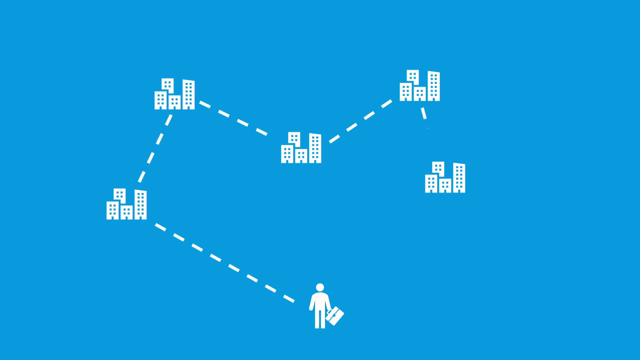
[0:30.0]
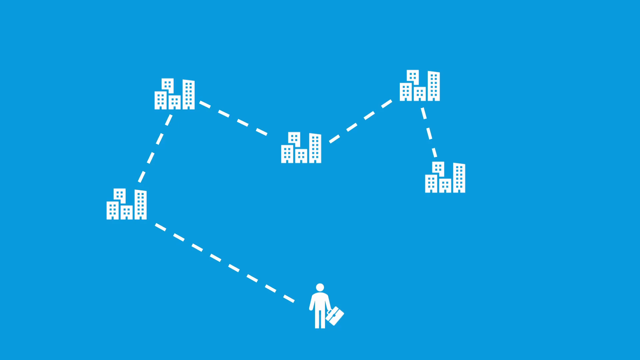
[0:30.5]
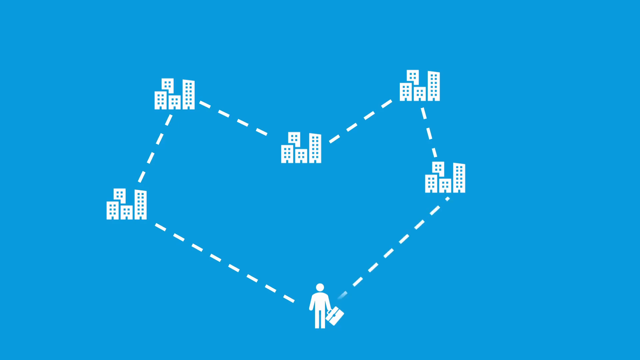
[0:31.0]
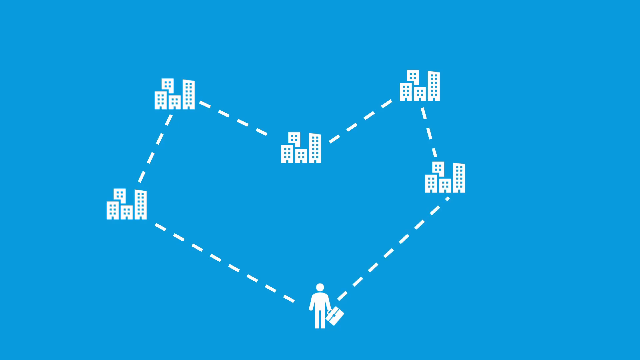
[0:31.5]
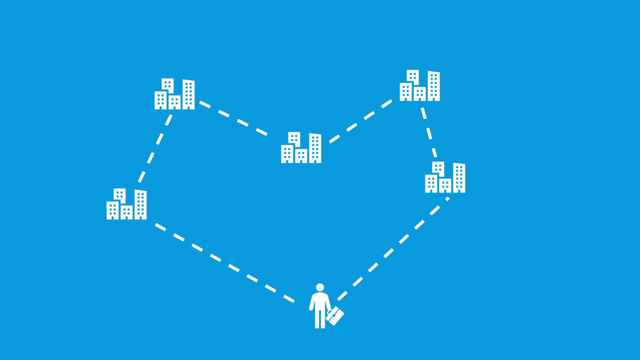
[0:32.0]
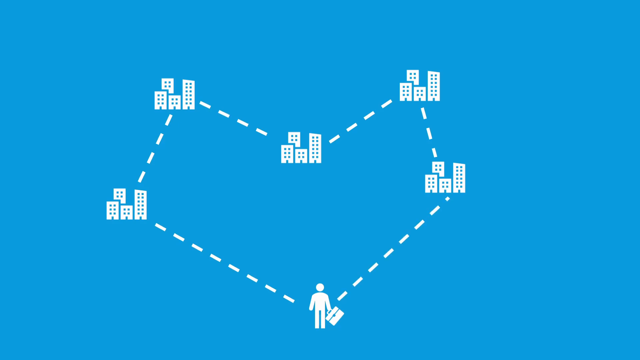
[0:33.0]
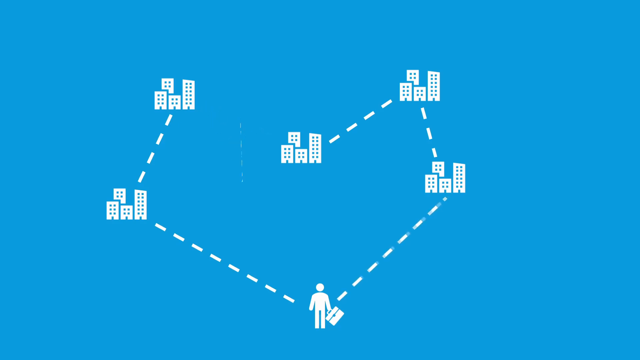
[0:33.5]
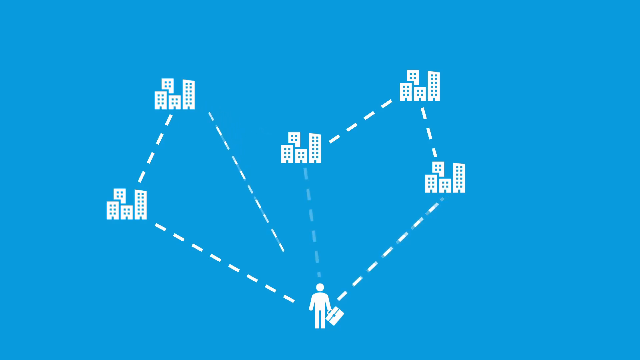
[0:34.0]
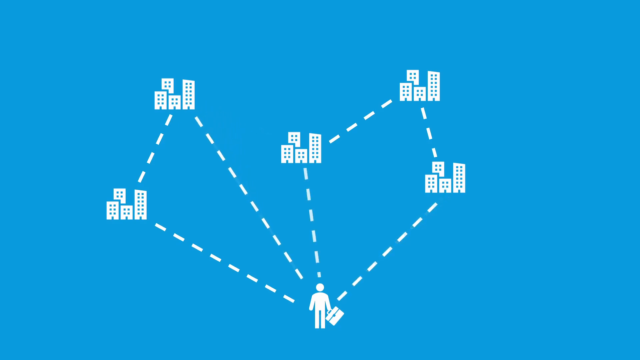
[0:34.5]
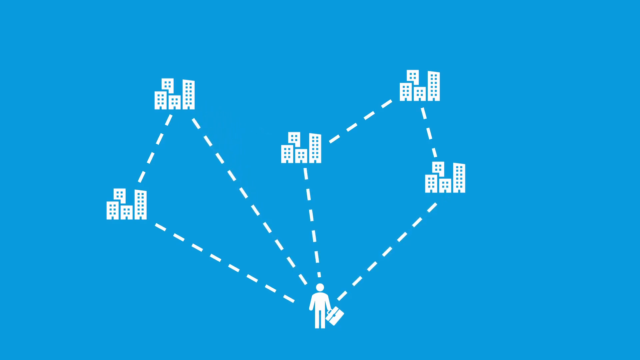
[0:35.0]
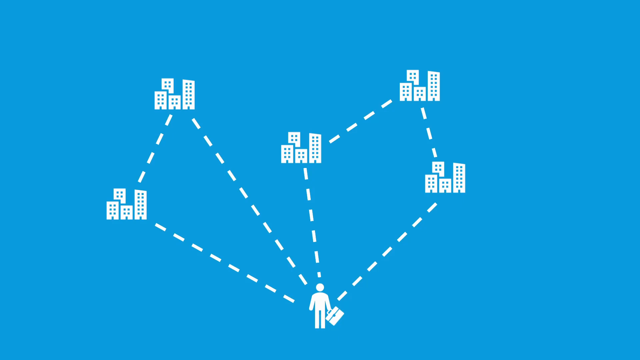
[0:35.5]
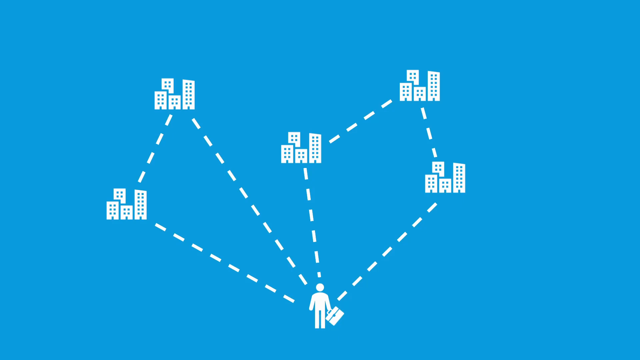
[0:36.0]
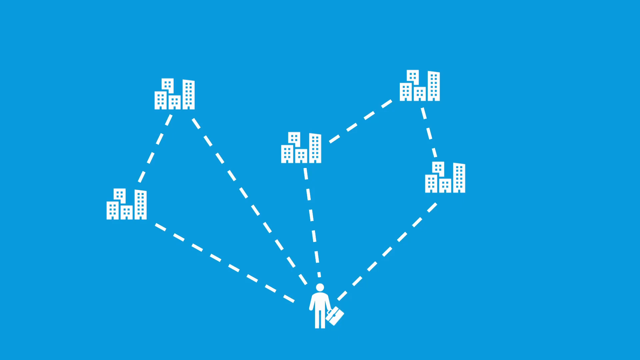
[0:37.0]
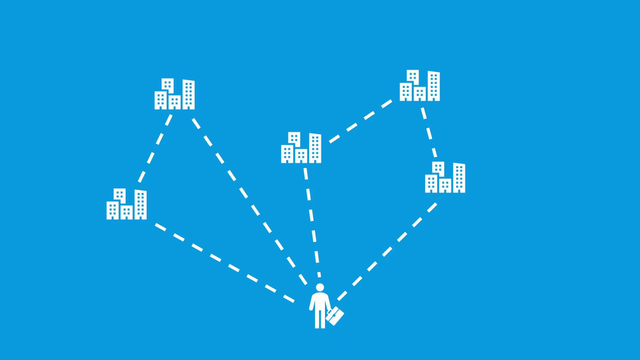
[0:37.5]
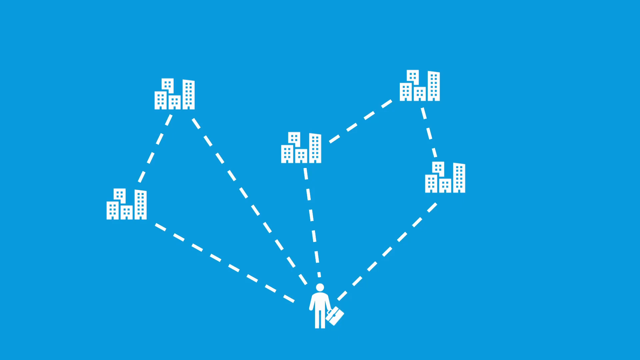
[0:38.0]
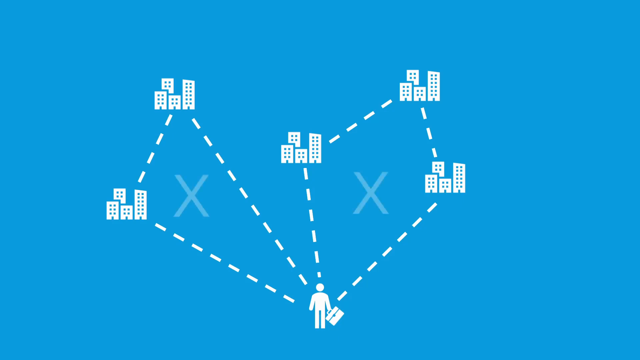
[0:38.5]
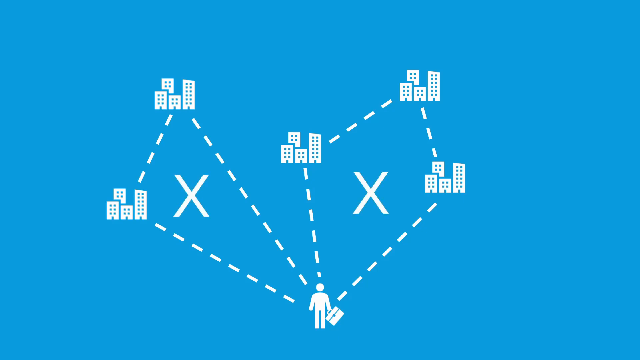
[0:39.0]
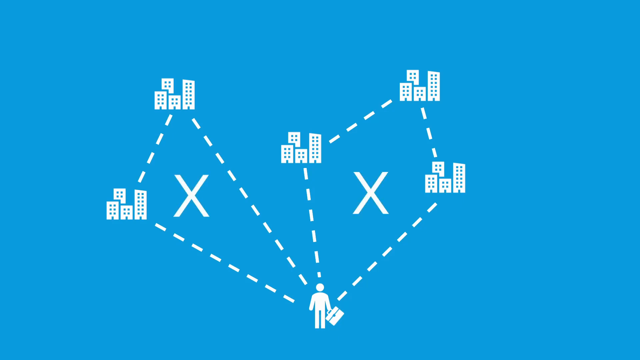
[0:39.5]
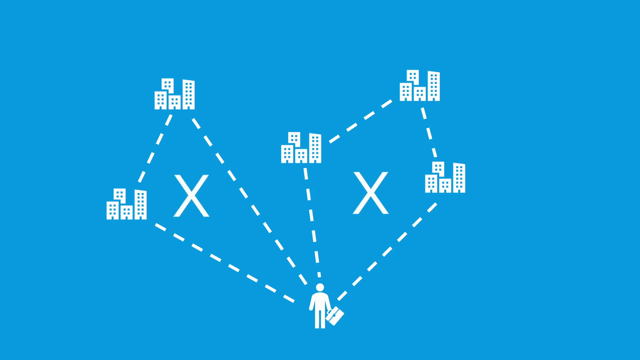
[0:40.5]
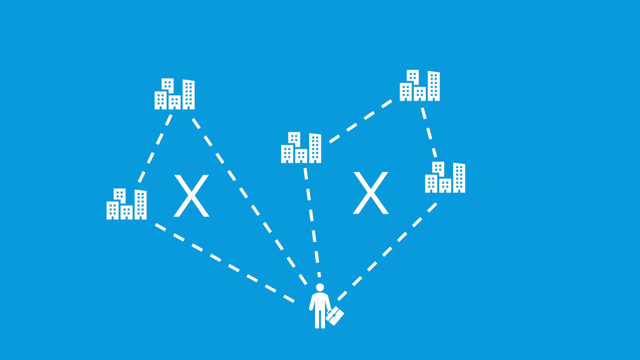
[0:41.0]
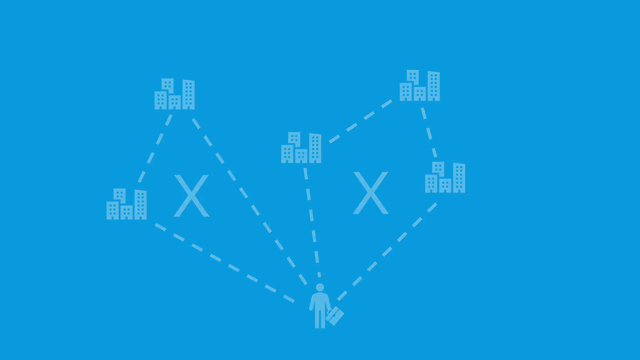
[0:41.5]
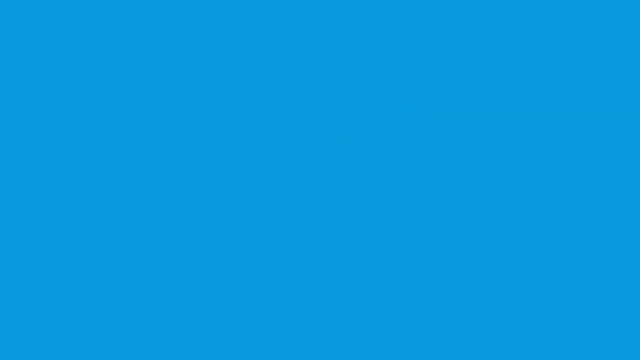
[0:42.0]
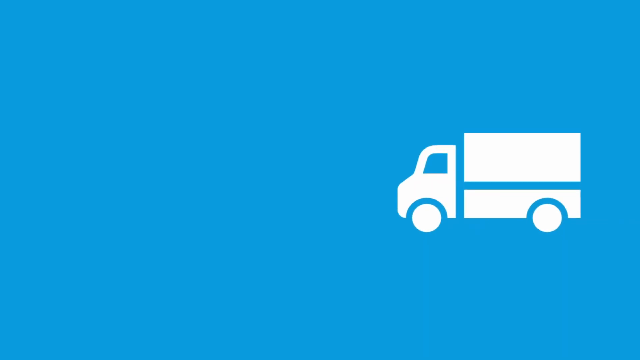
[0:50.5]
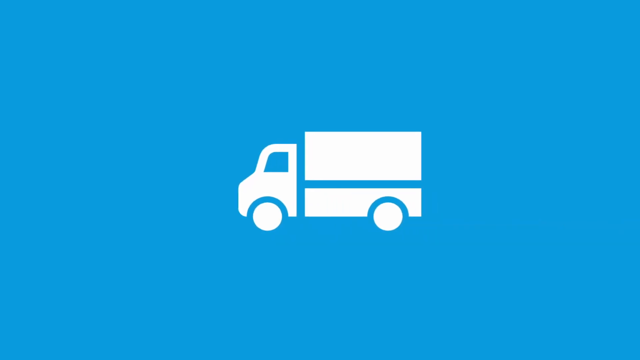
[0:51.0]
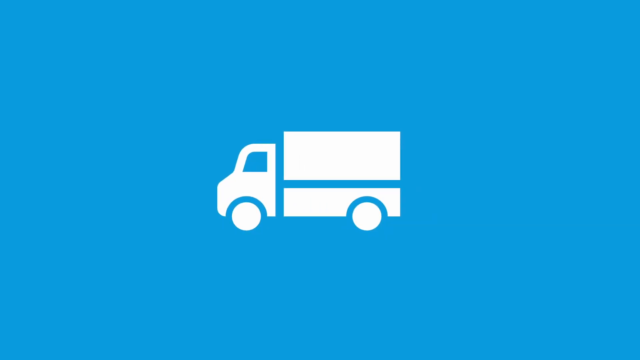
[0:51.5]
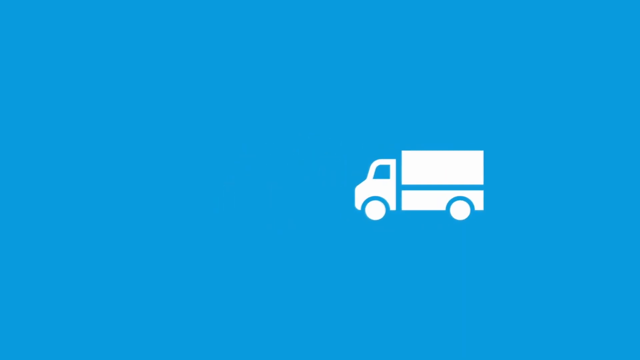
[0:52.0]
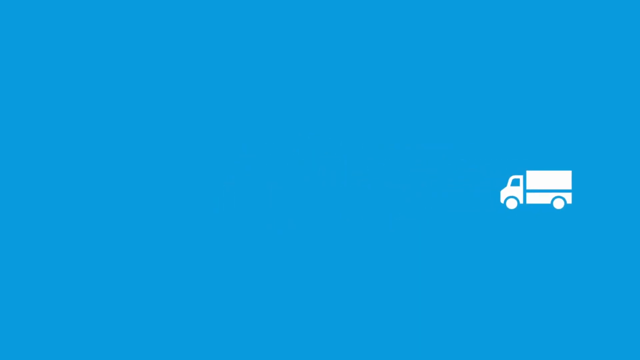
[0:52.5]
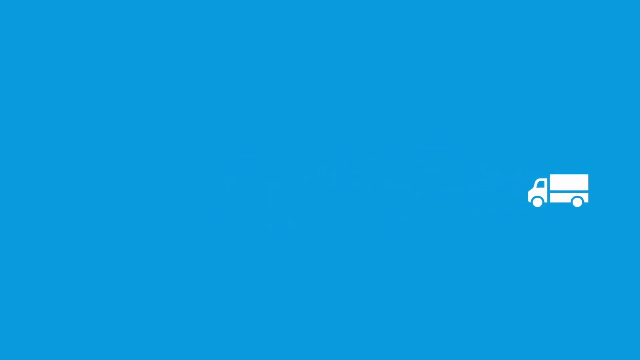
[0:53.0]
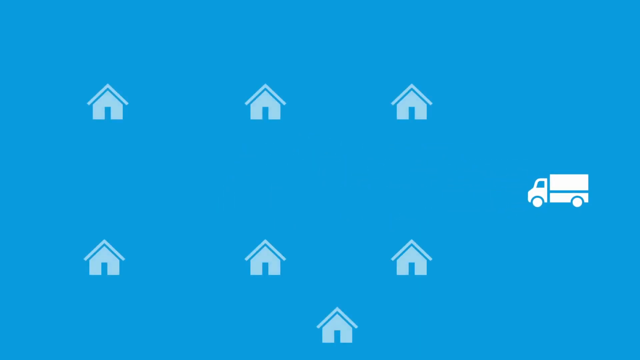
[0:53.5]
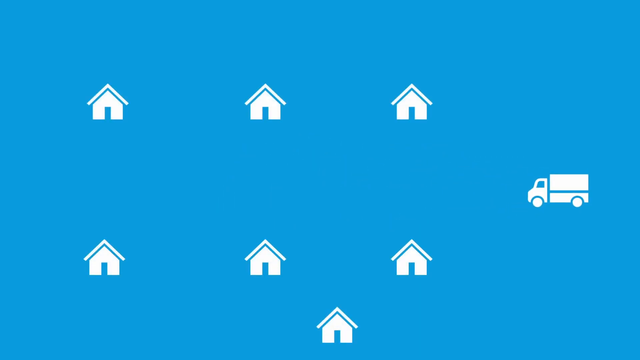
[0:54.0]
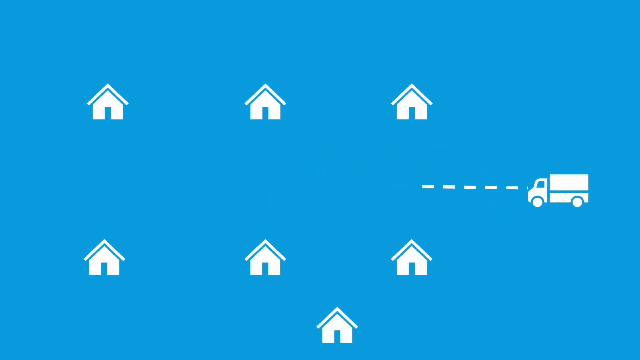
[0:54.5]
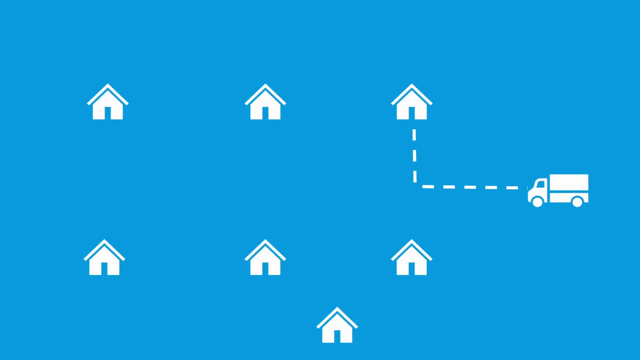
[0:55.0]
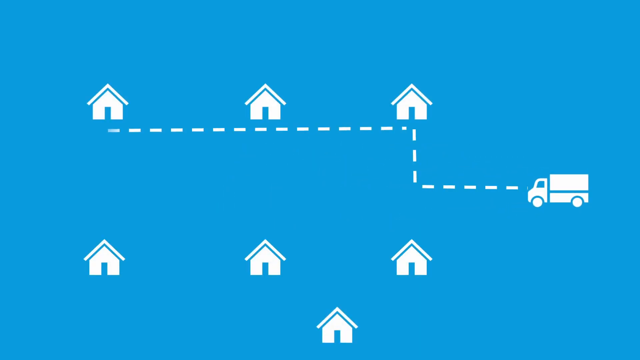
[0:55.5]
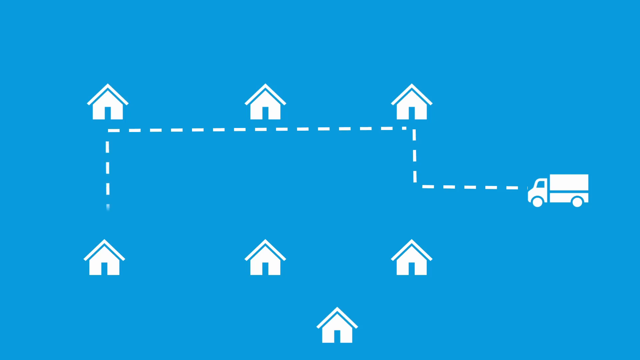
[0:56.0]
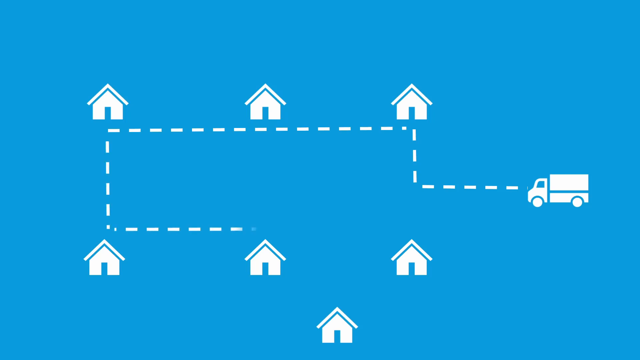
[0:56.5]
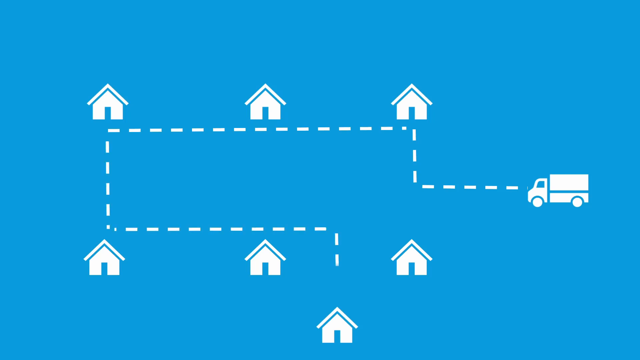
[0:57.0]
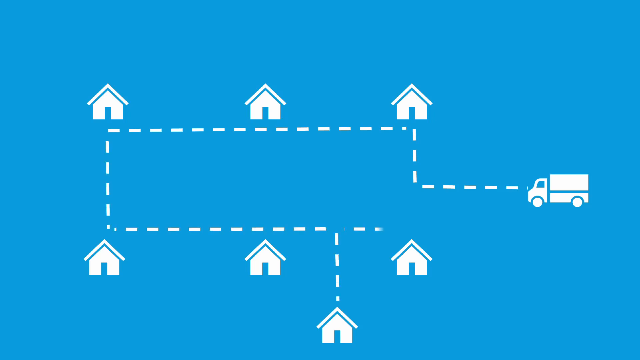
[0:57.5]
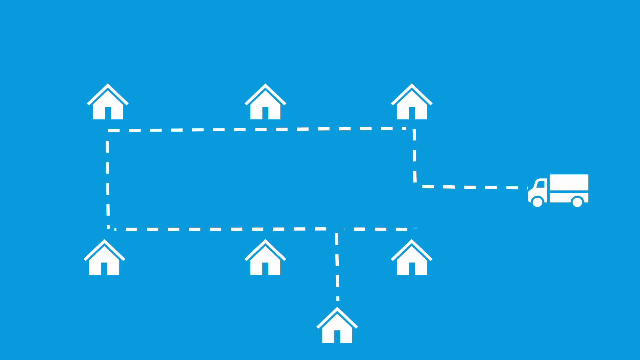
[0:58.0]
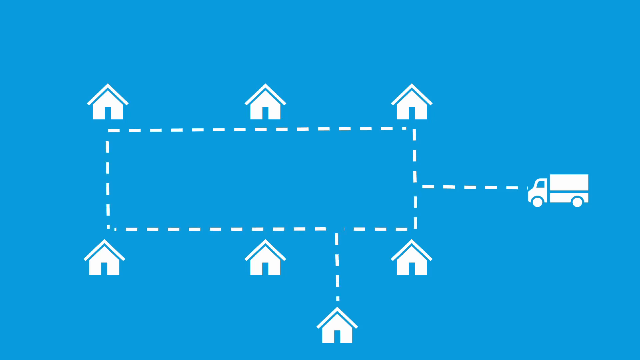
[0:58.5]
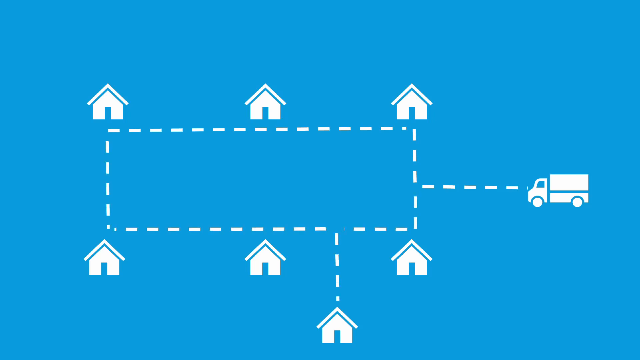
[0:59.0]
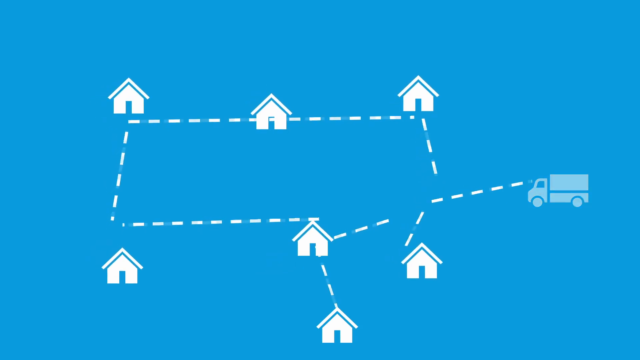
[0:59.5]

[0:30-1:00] The video has a blue background, and most of the graphics are white. A picture of a man with a briefcase is at the bottom; he looks like the man on a bathroom door. Five cities are arranged kind of in a heart shape, with dashed lines apparently showing where the traveling salesman goes and then comes back, in a heart shape. One of the dashed lines between two cities is rotated so that it goes right back to him instead of to the other city, and another city's dashed line also goes down to him, making something like two circles between the five cities. Two x's appear in the middle of these circles. The screen then goes completely blue, and a truck shows up, first big, moving to the middle, and then moving off to the right.